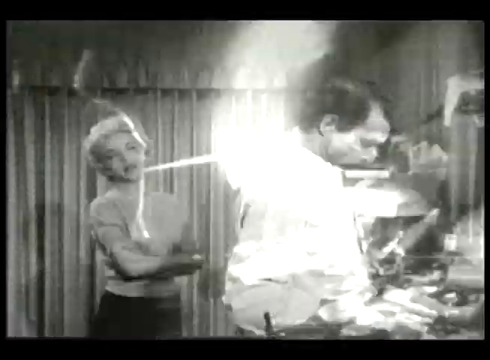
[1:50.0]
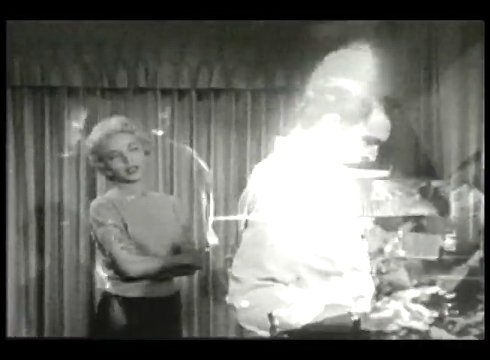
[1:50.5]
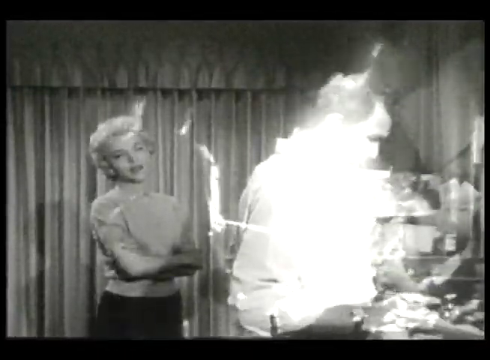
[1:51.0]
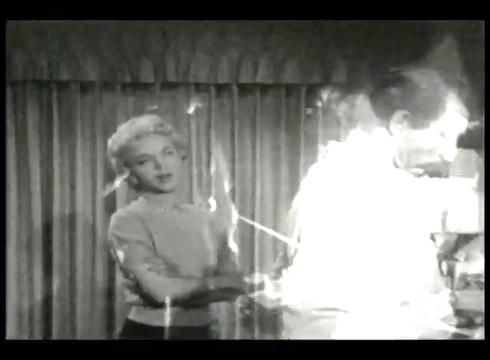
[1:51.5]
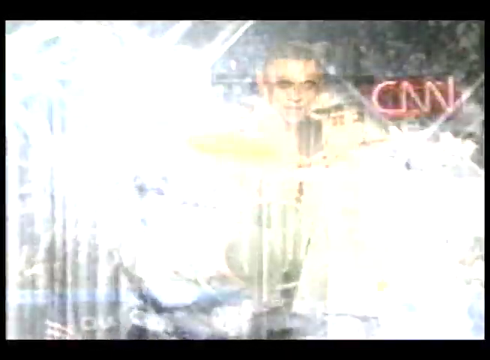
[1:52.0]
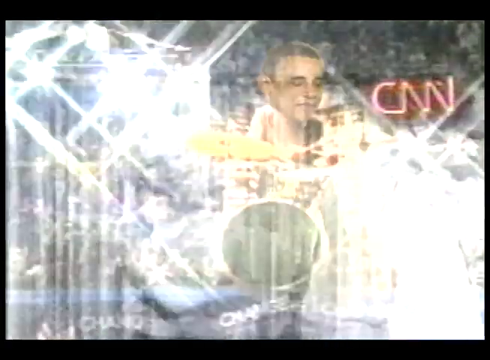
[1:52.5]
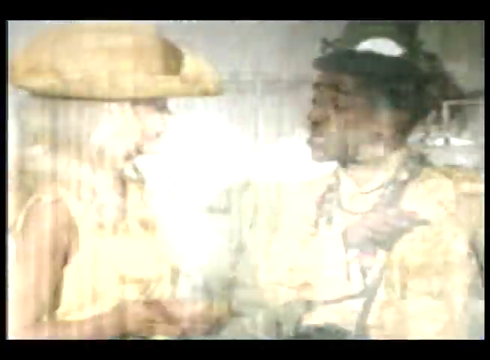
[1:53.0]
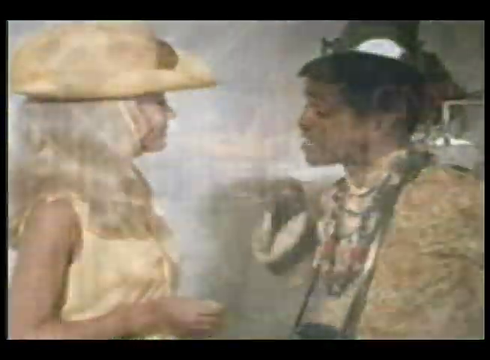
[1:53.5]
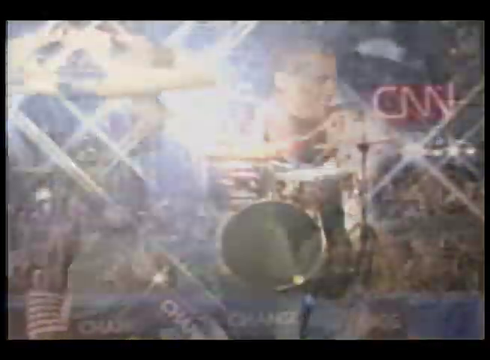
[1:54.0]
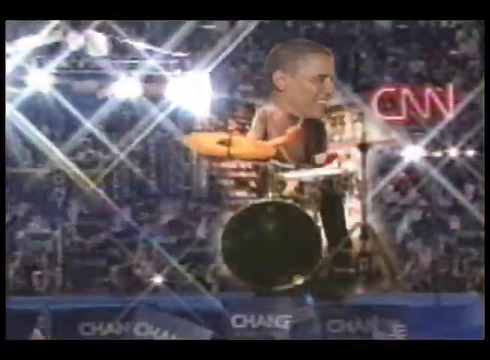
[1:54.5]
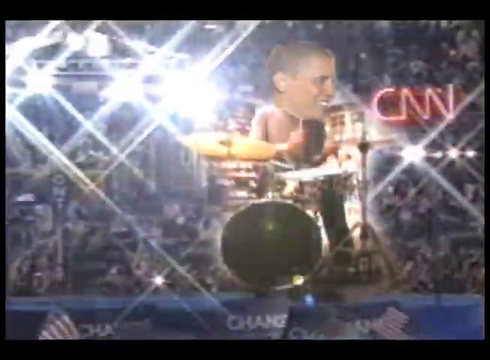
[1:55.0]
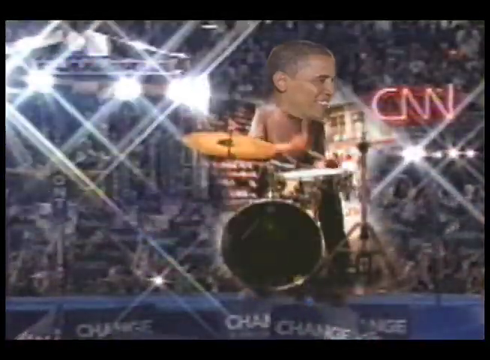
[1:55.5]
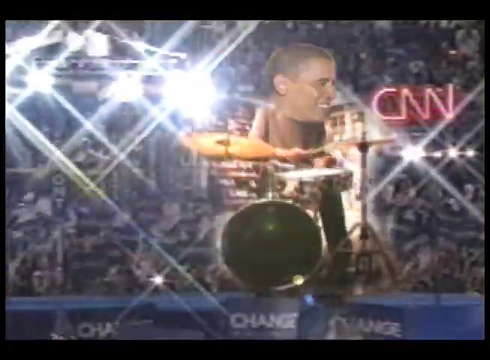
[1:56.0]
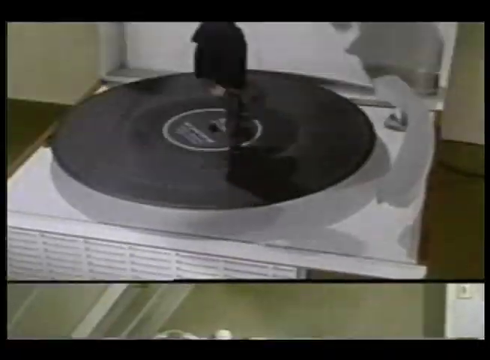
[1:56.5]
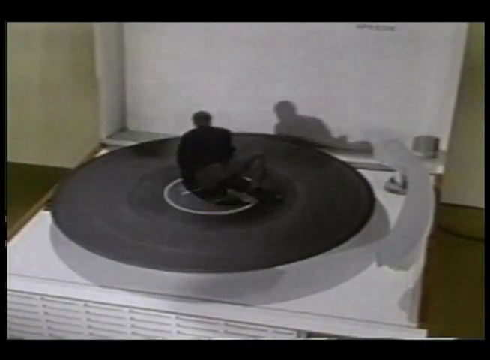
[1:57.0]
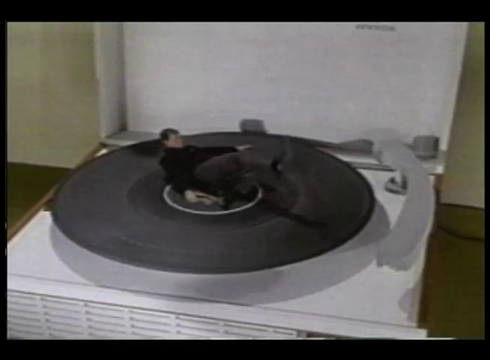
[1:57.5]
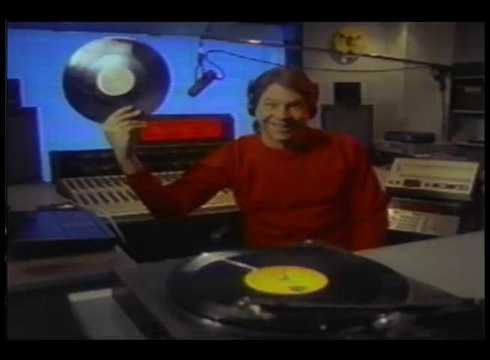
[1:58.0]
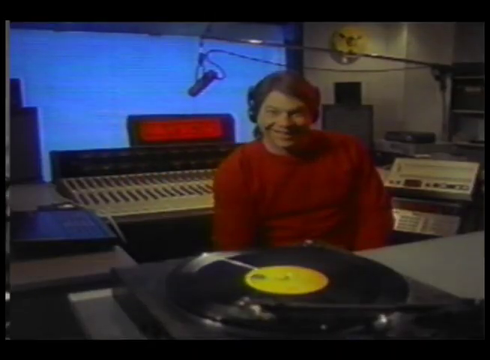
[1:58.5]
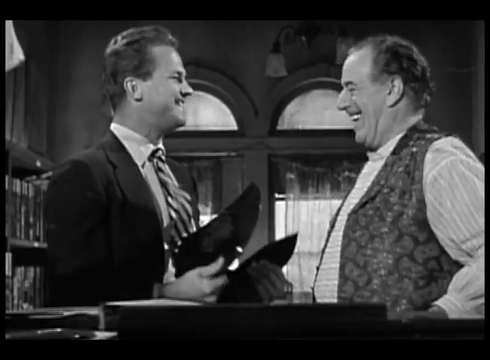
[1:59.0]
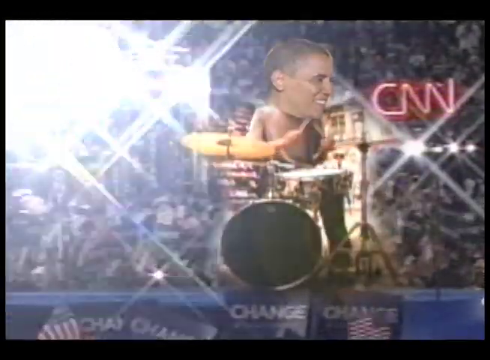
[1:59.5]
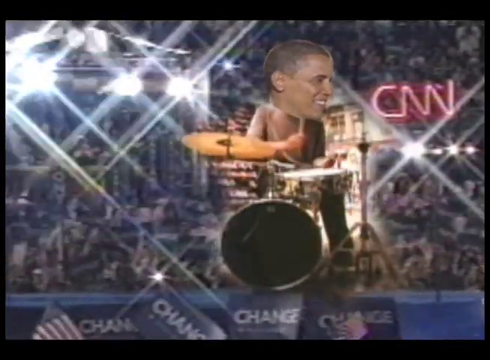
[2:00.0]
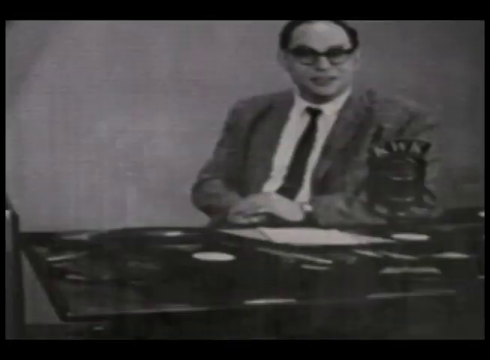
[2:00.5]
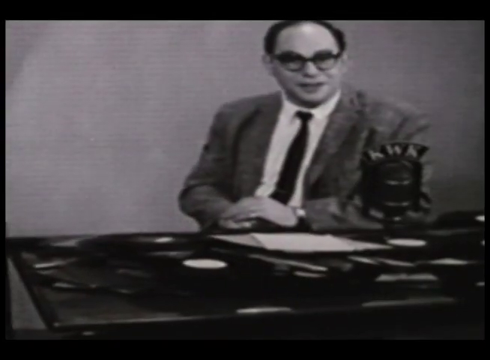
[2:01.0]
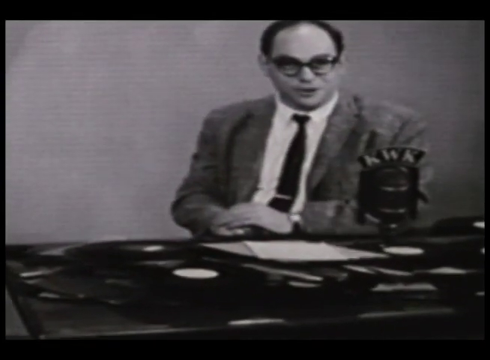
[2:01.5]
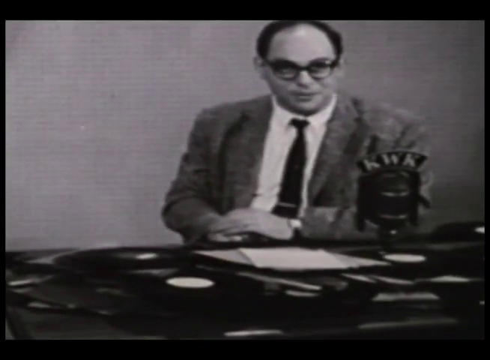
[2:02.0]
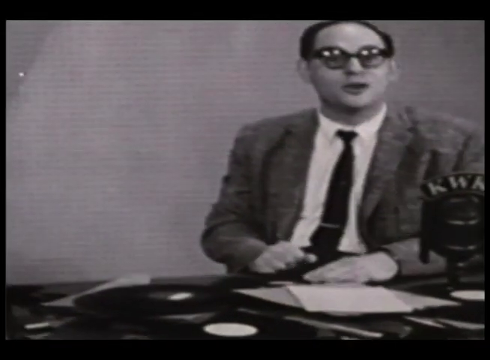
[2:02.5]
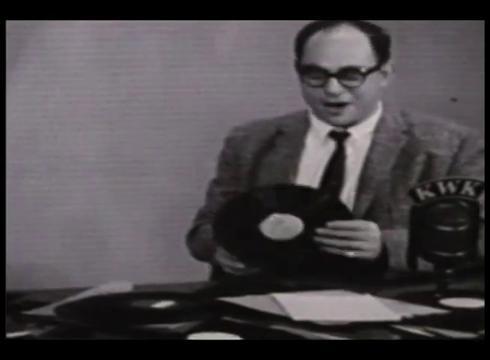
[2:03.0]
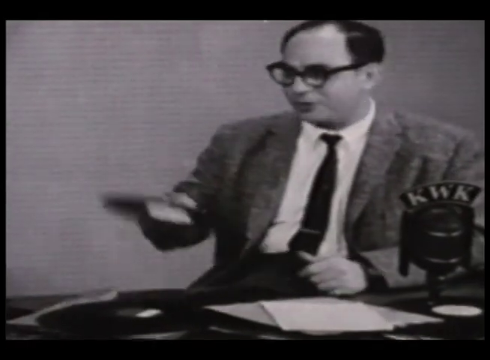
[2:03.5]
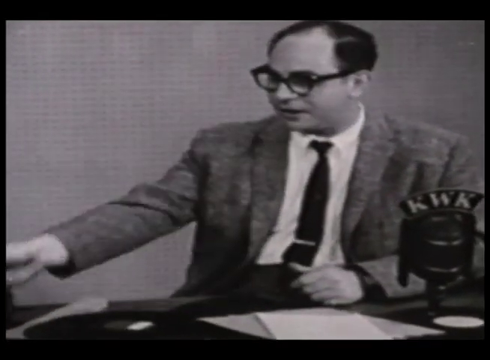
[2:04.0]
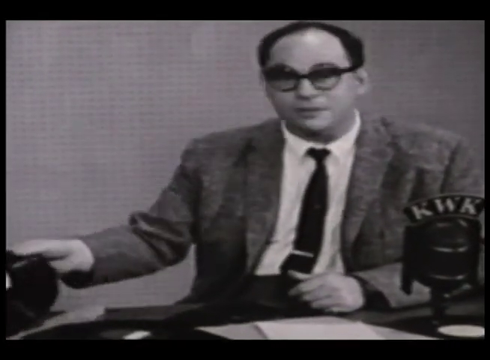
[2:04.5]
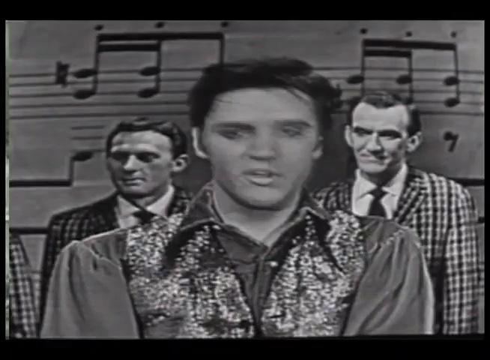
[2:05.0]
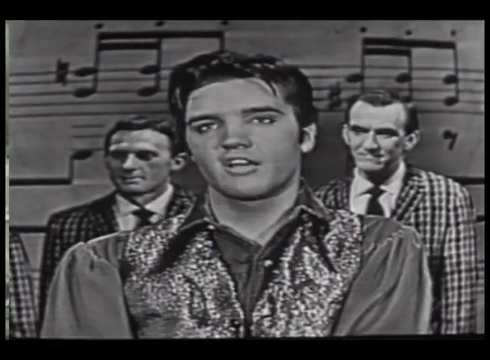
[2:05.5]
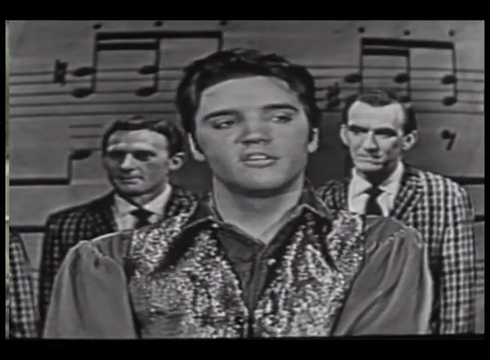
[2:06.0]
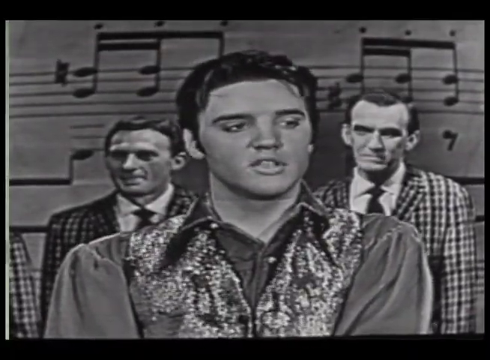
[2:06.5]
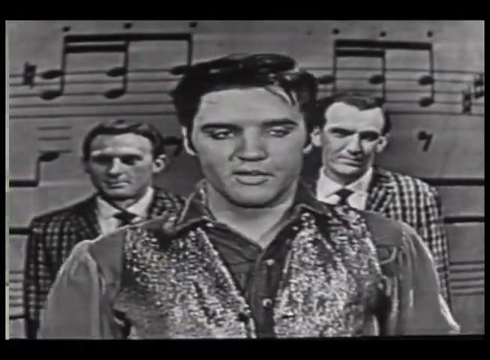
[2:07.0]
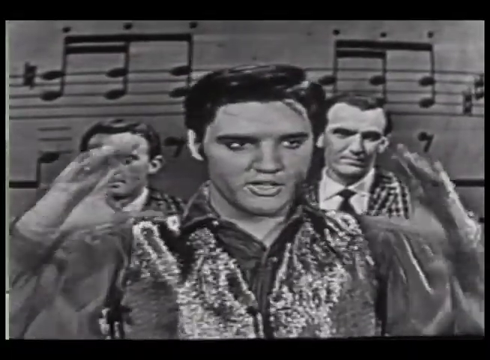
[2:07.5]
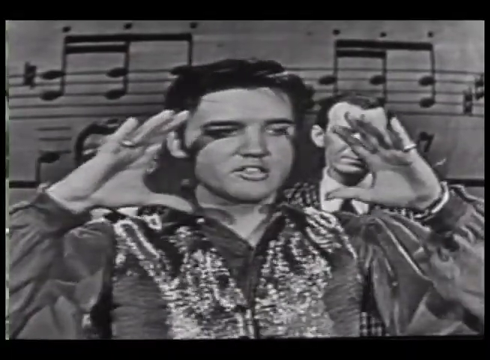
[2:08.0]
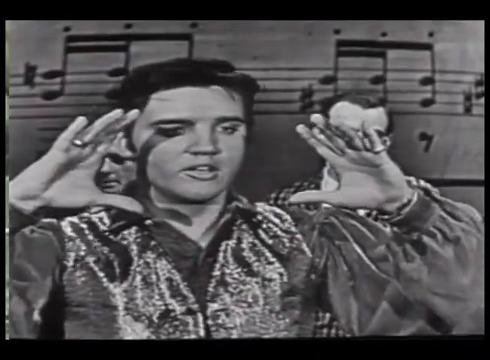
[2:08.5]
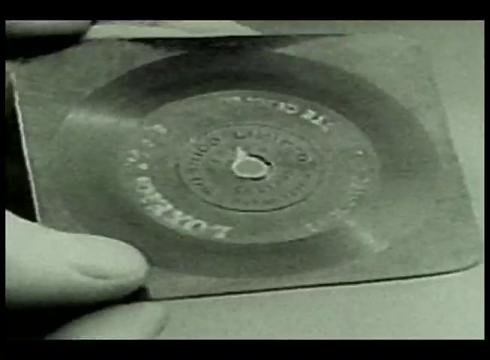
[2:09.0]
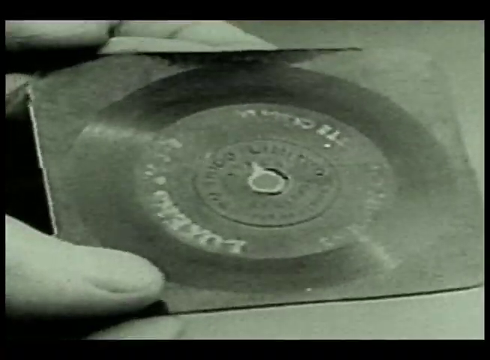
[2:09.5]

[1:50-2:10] The sequence begins with an old black-and-white show of what looks like a man and a woman talking together very briefly. It goes back to the drumming Obama, then to a Black man talking to a white woman in kind of an old-fashioned TV clip, then back to the drummer Obama. Next, a man stands on a turning record player and then falls down. A DJ holds up a record while sitting in front of a turntable and then slams it down to the ground. The video switches to the man breaking the record in half, then back to the drummer Obama, then to what looks like an old-fashioned black-and-white talk show host talking. Elvis is then shown talking, and the sequence ends with a closeup of an old-fashioned record that looks like a 45.